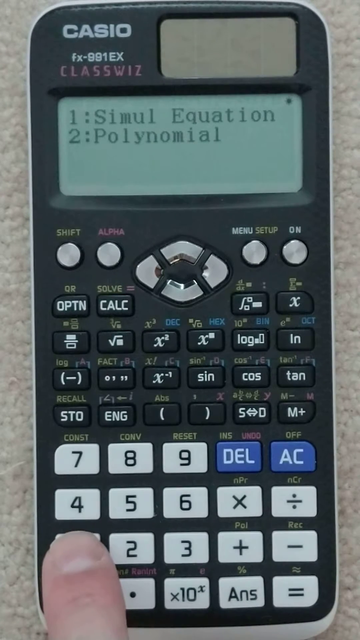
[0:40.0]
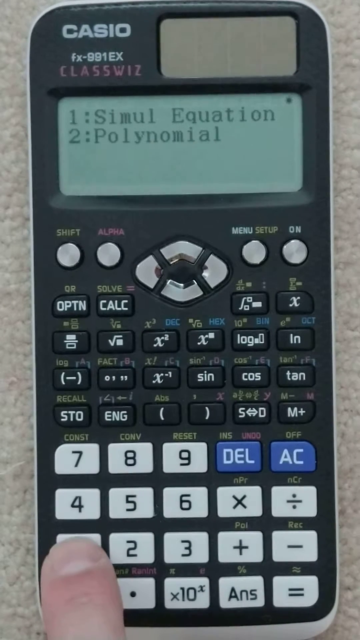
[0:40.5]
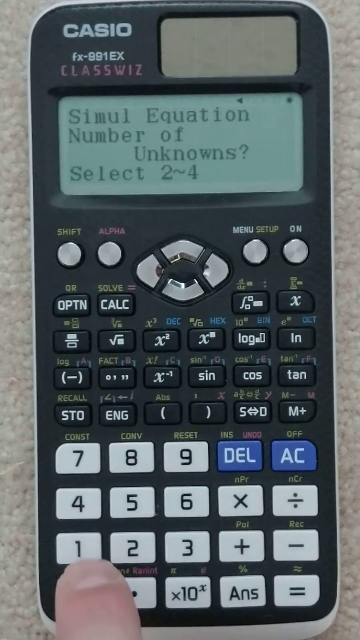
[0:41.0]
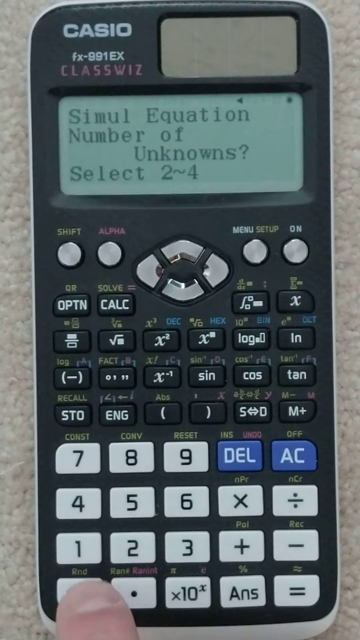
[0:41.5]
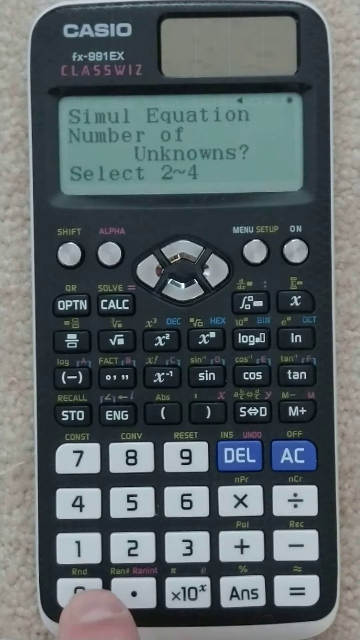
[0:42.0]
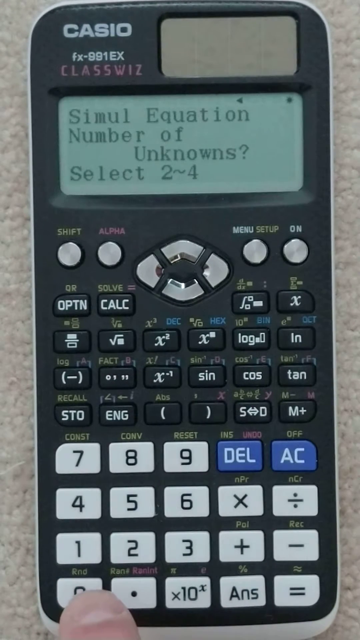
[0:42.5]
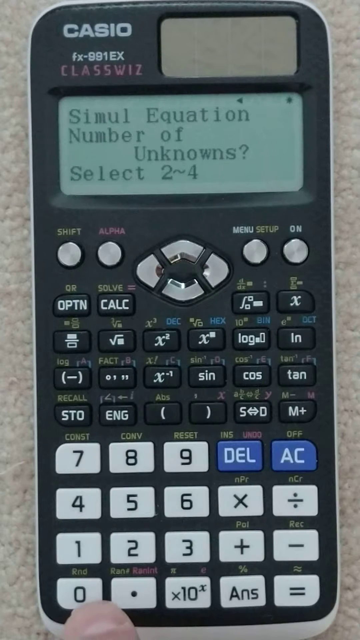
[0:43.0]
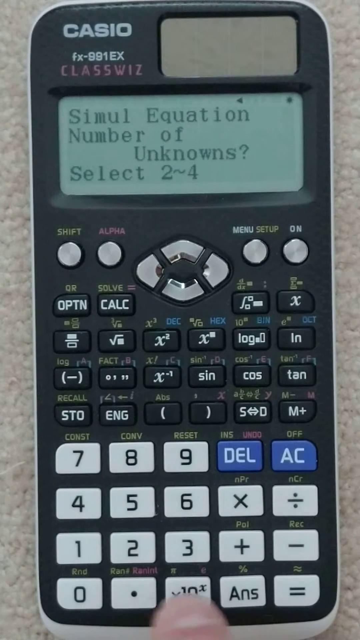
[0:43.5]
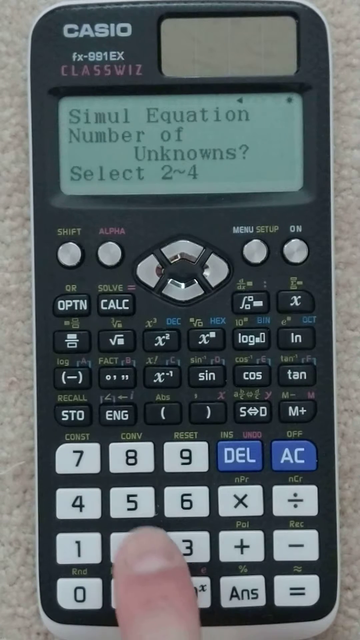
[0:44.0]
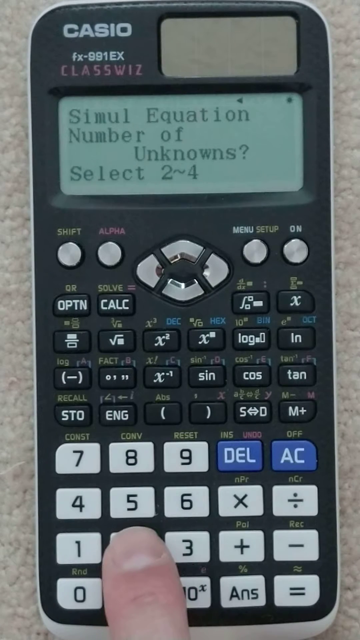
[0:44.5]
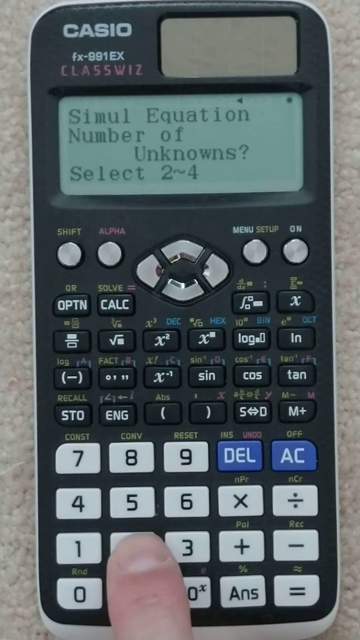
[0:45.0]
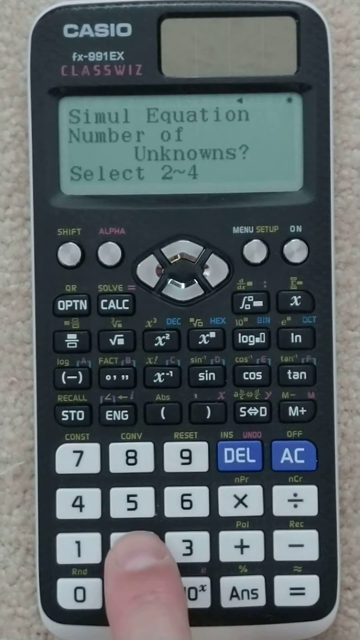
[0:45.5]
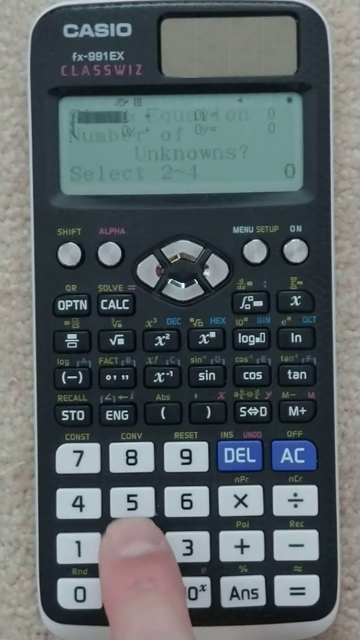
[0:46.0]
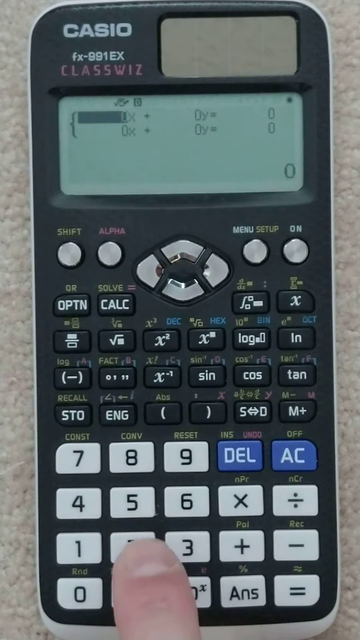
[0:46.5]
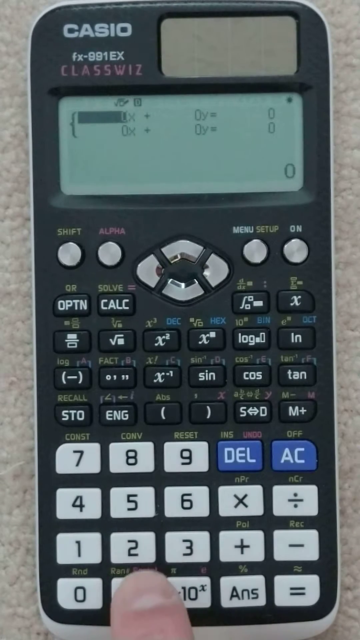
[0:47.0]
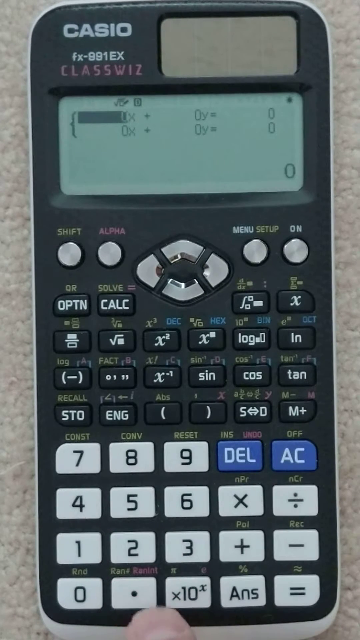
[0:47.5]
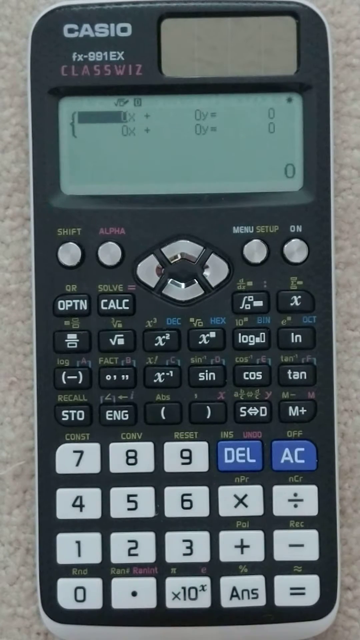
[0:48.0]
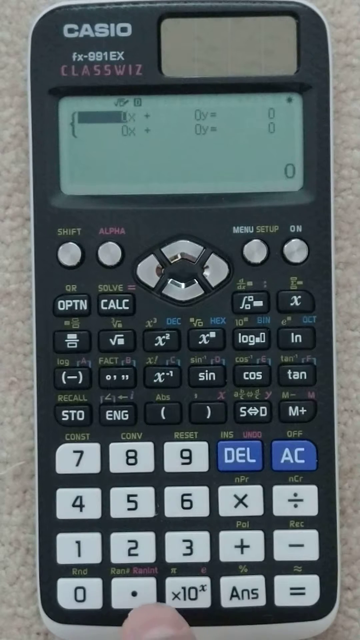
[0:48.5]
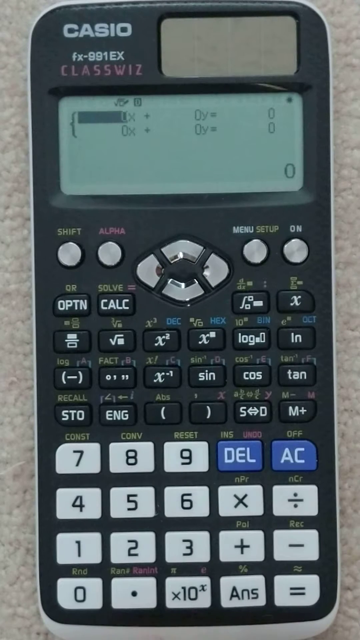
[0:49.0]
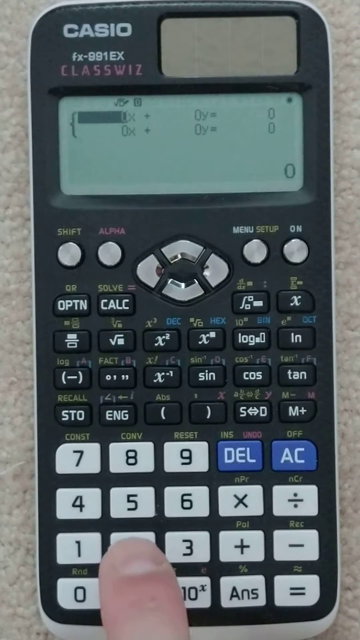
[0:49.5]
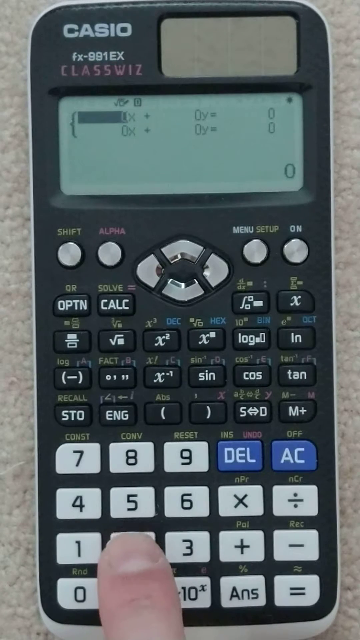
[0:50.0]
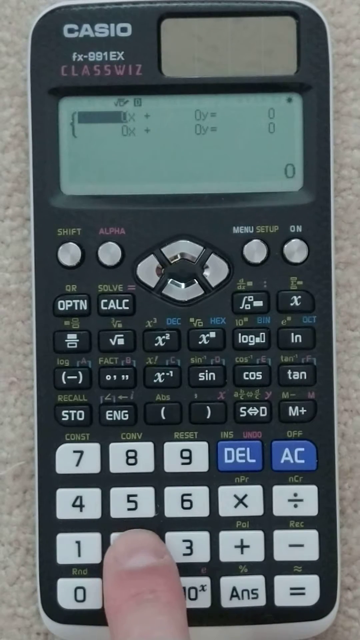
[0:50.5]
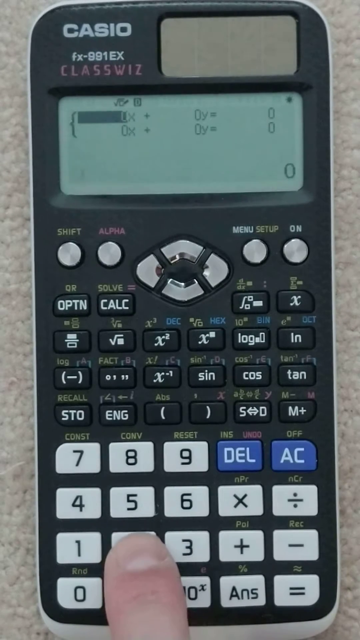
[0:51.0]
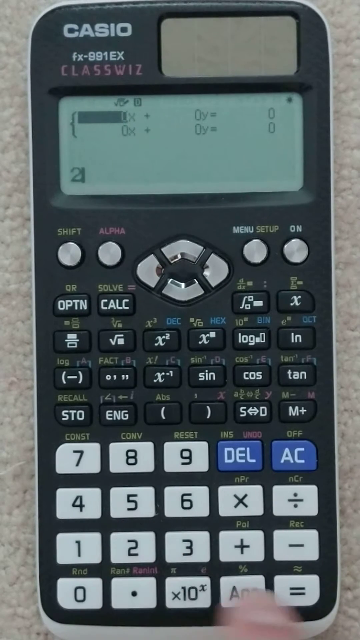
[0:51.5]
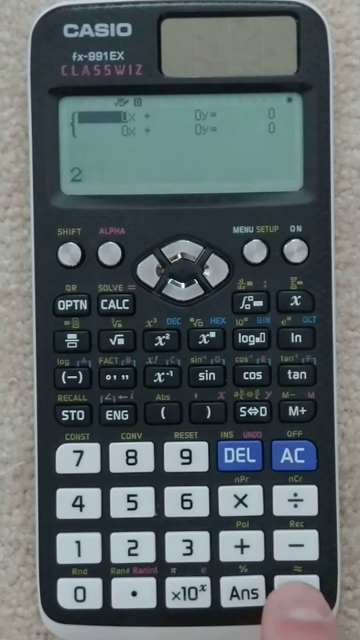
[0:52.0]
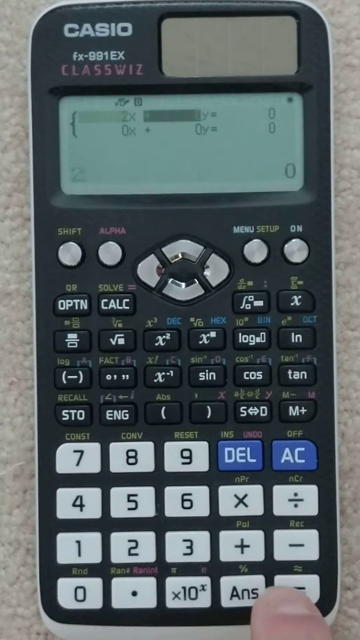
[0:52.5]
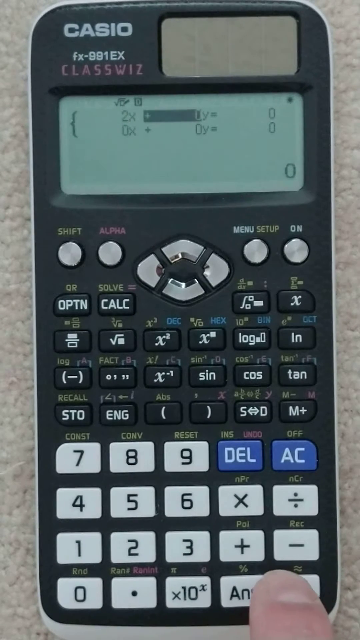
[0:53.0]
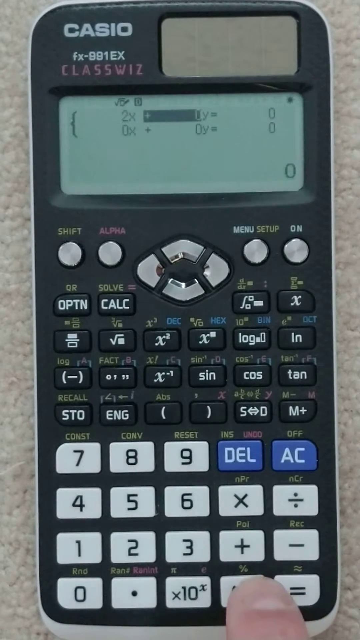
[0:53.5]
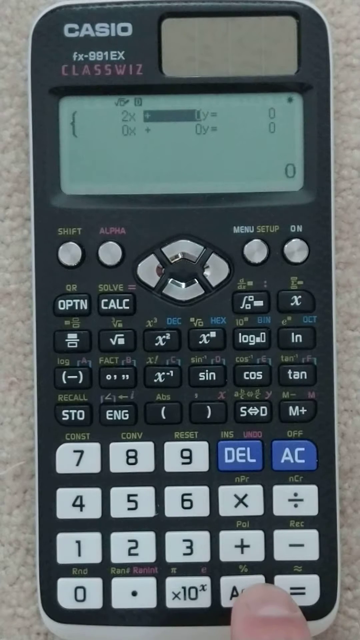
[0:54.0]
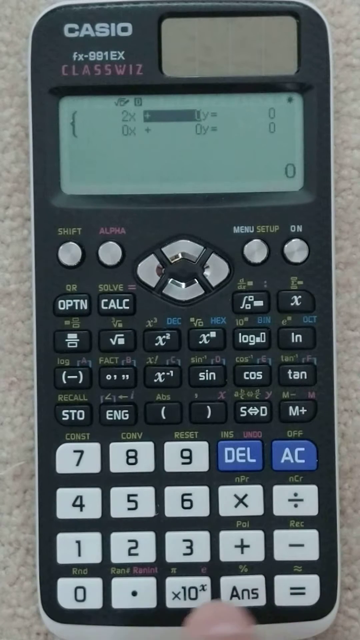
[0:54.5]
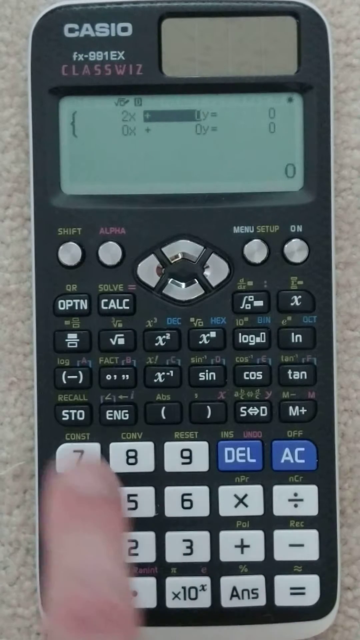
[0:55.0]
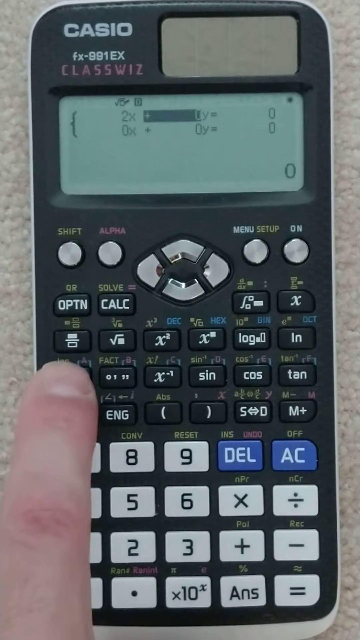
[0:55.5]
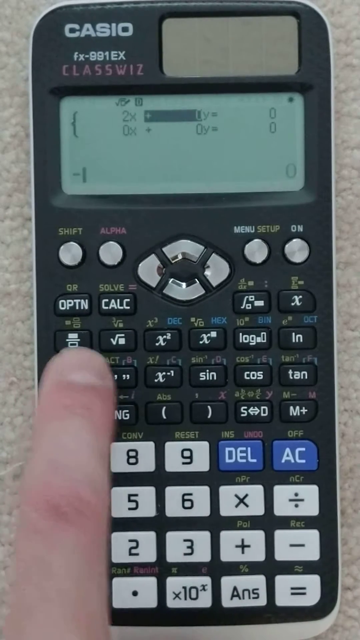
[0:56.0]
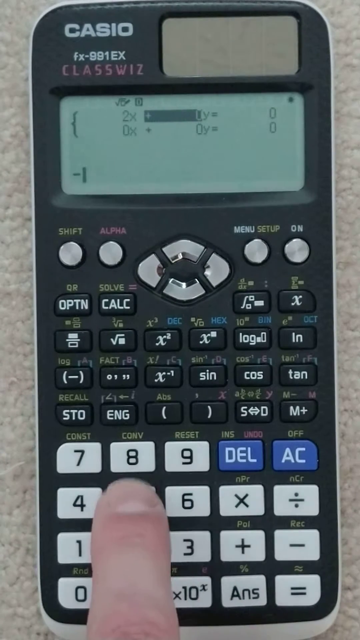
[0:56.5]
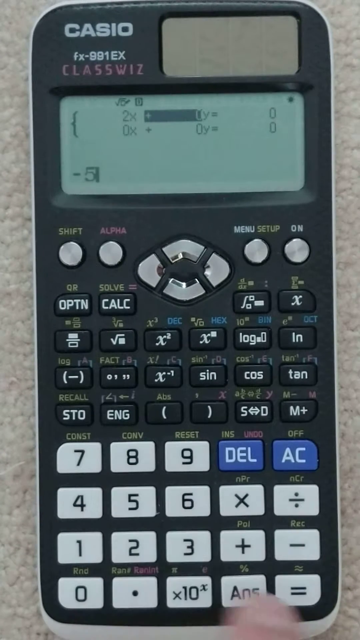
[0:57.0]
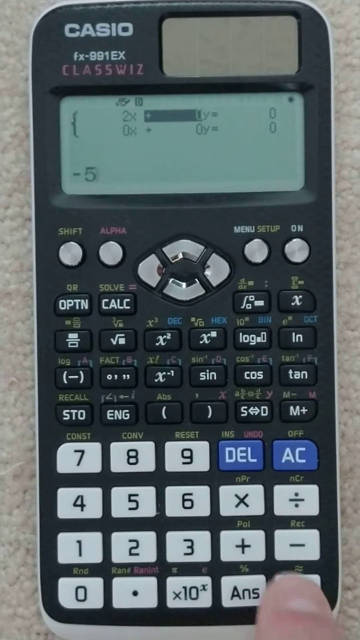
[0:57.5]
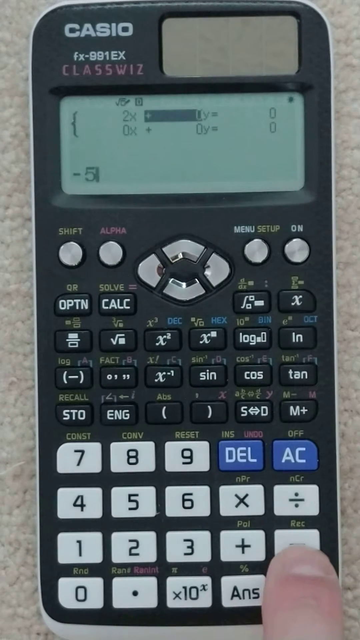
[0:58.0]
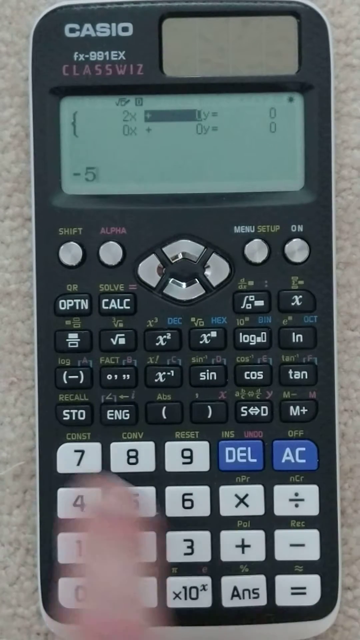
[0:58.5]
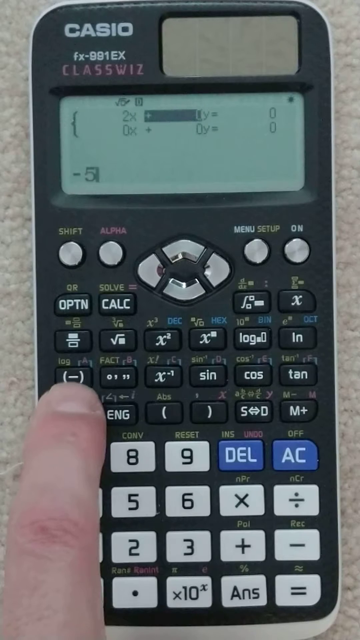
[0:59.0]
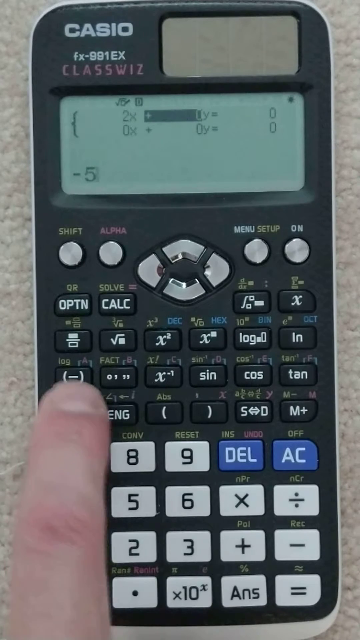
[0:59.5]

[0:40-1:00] An overview of the system with those parameters appears on the screen. The user moves on to the simul equation number of unknowns selector, and then a screen appears where the user presses the keys and starts putting in the data. The calculator is a Casio Classwiz, model FX-991EX. On the top right side of the calculator there is a brownish section, potentially its solar power panel. It has white keys with black digits for the digit section, and above those a series of darker keys with white text for various mathematical and scientific functions. The Classwiz logo appears in full caps in red.